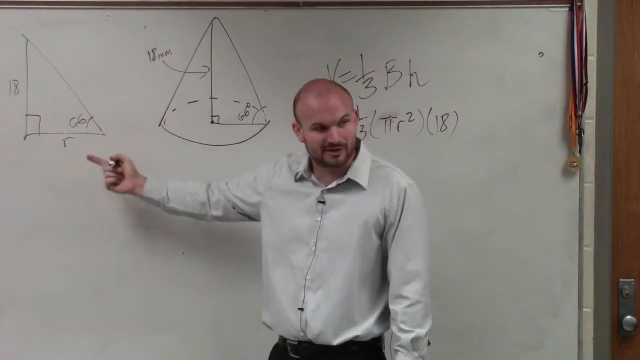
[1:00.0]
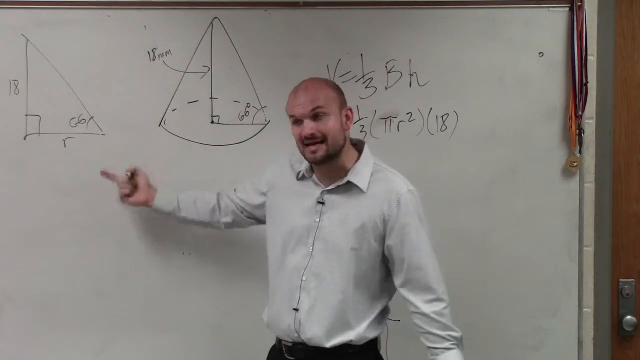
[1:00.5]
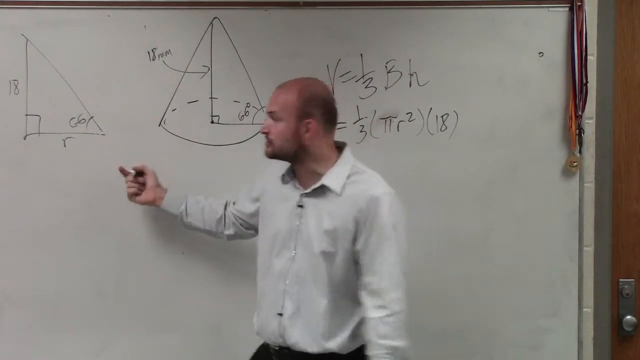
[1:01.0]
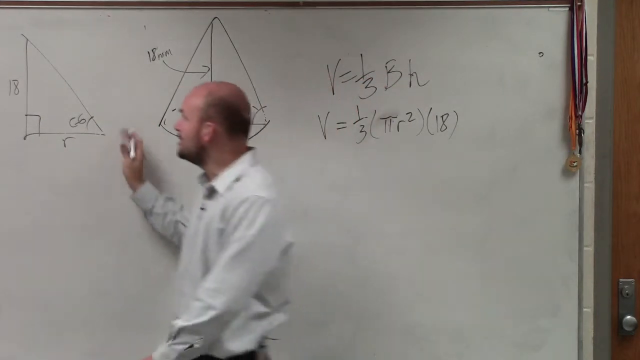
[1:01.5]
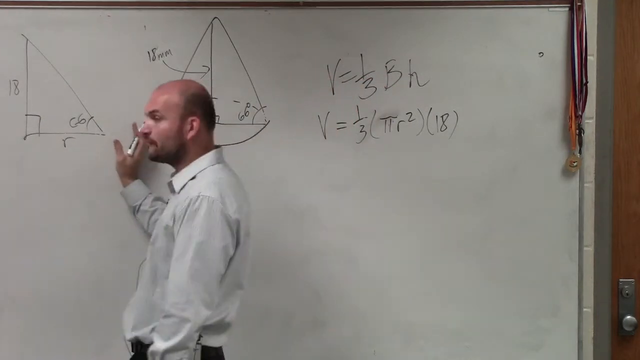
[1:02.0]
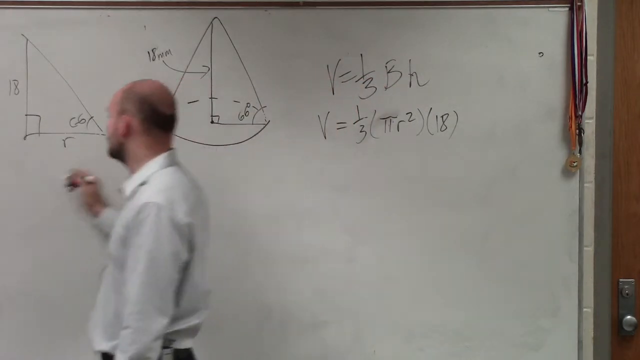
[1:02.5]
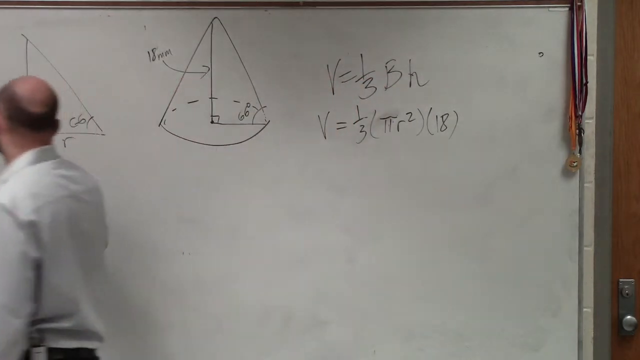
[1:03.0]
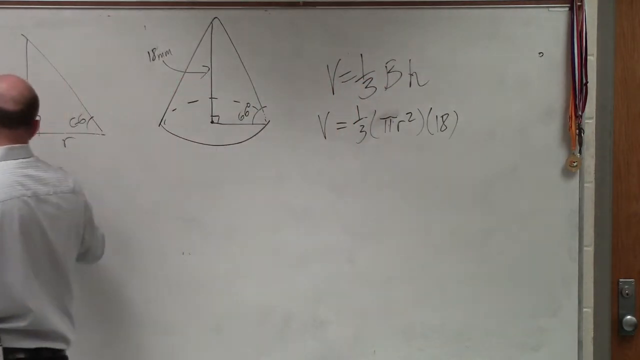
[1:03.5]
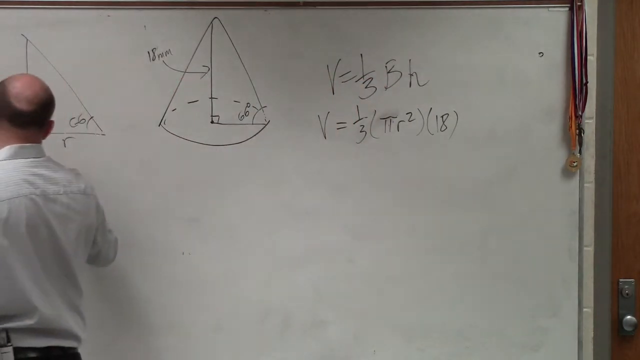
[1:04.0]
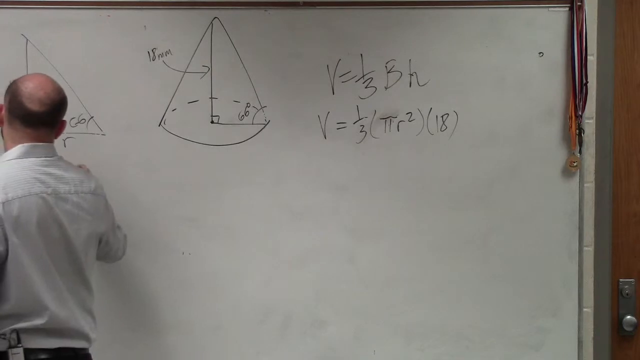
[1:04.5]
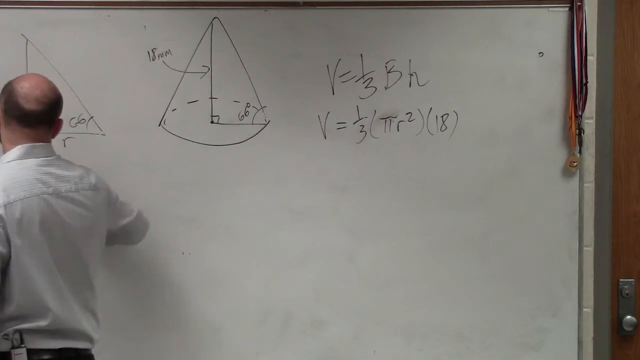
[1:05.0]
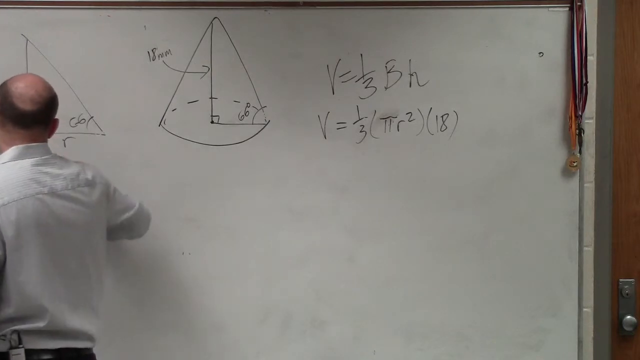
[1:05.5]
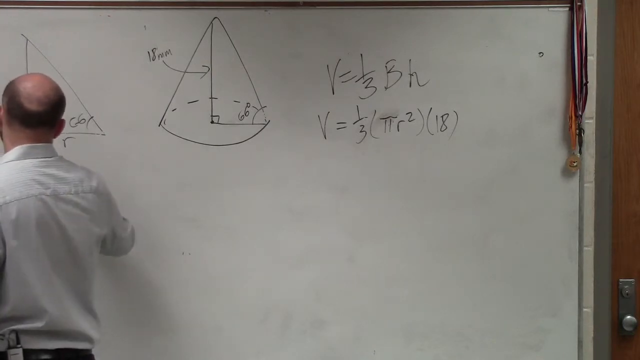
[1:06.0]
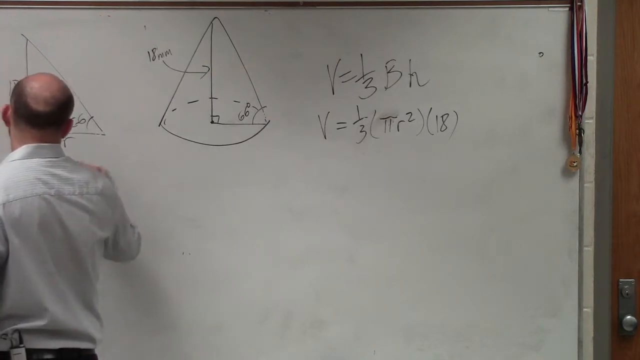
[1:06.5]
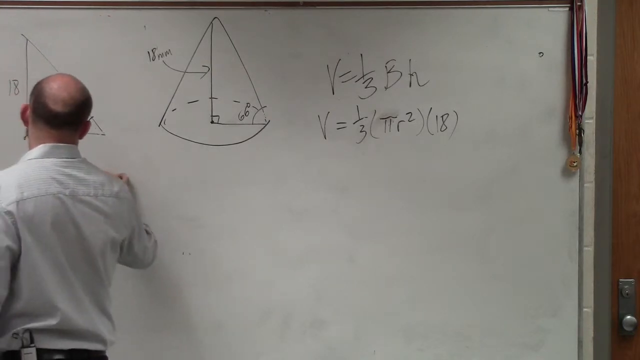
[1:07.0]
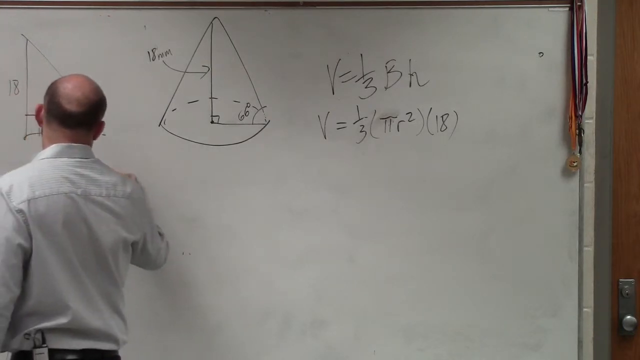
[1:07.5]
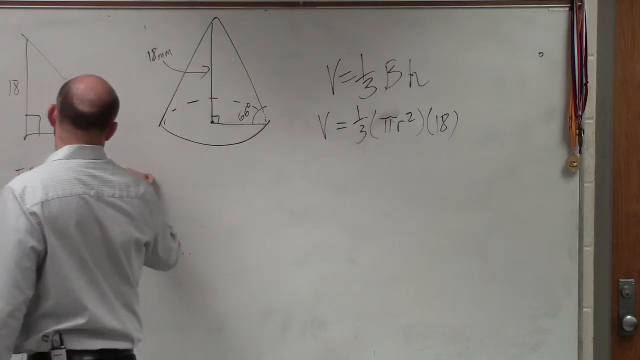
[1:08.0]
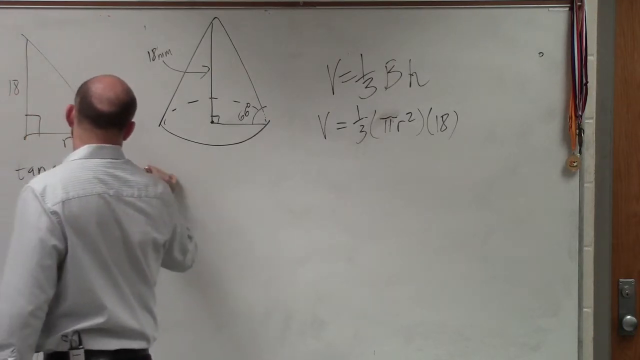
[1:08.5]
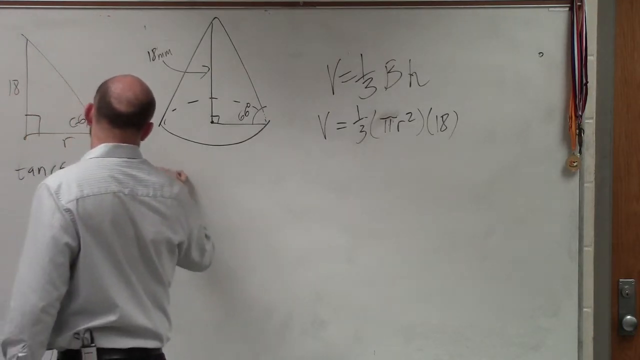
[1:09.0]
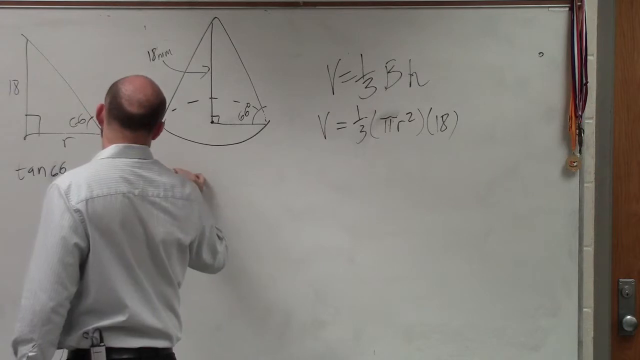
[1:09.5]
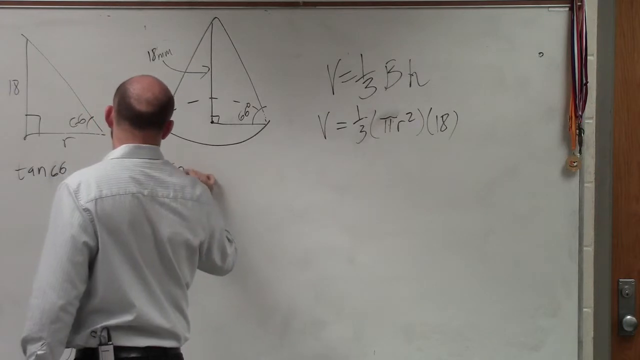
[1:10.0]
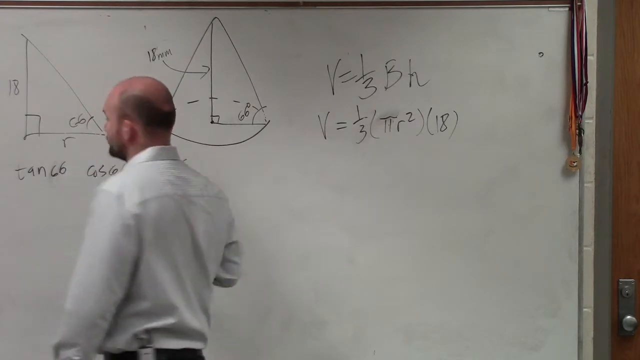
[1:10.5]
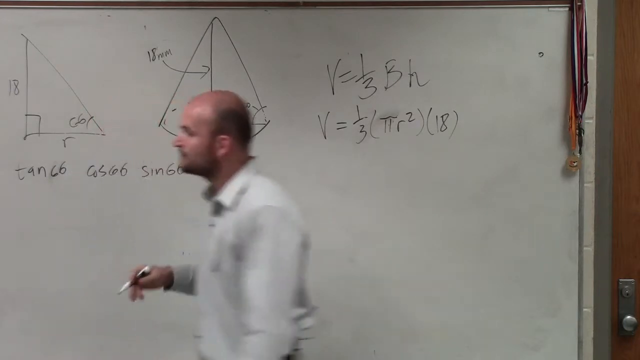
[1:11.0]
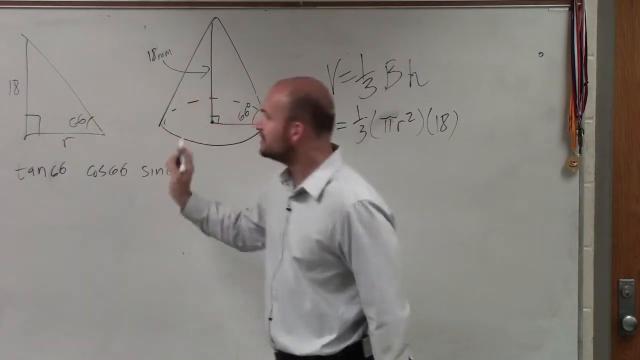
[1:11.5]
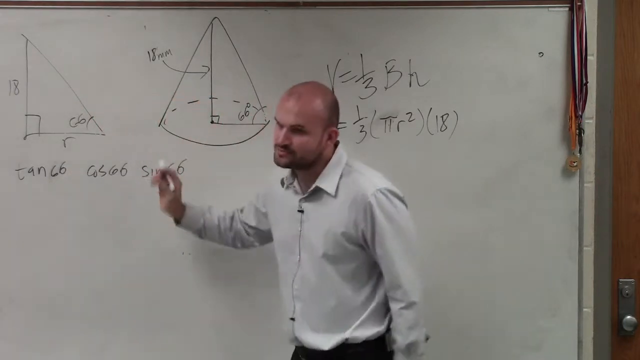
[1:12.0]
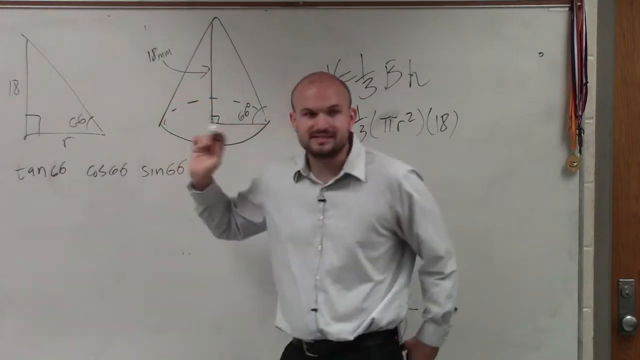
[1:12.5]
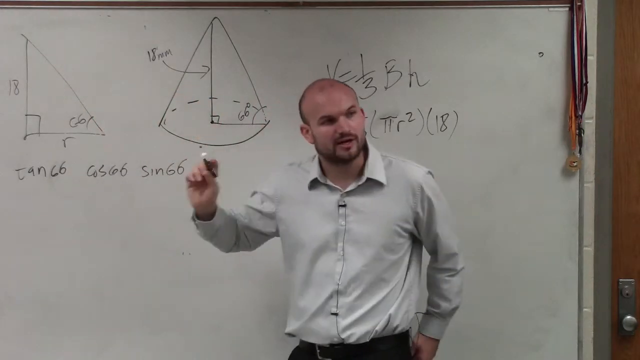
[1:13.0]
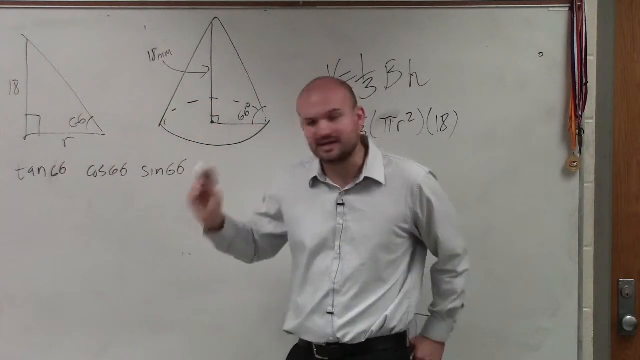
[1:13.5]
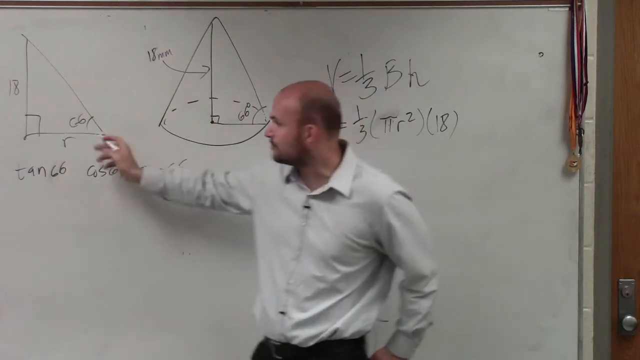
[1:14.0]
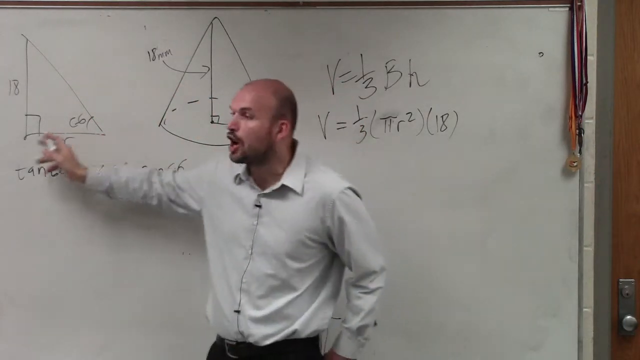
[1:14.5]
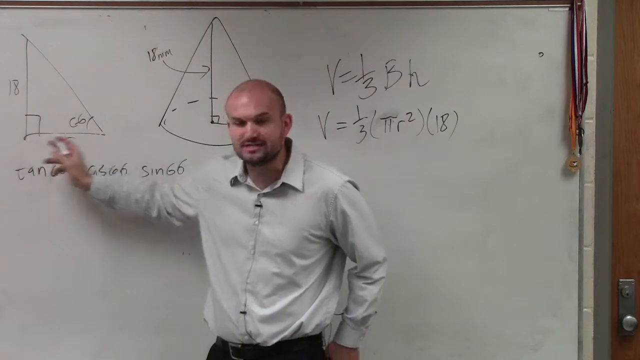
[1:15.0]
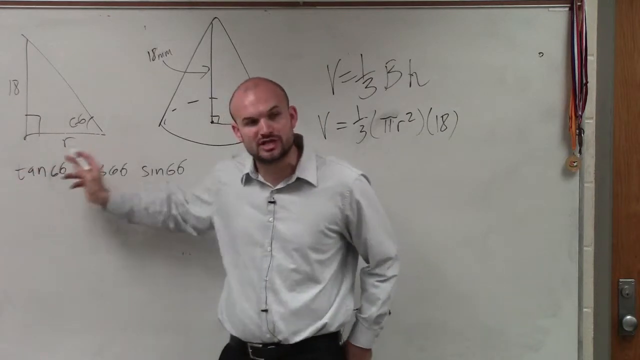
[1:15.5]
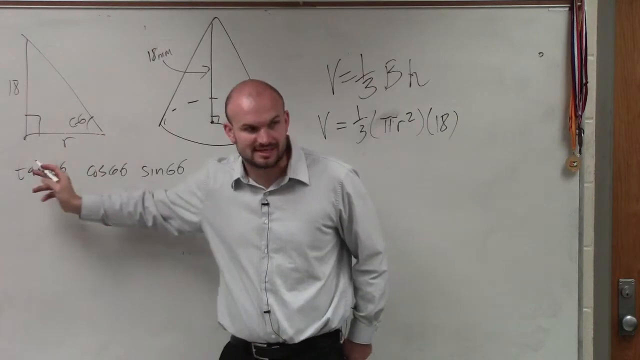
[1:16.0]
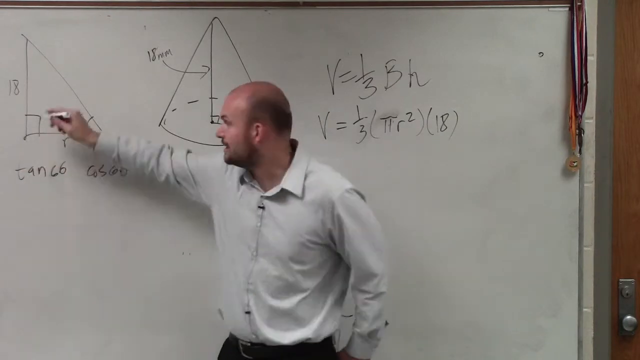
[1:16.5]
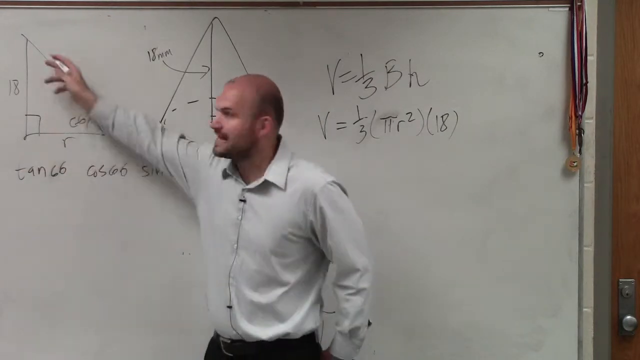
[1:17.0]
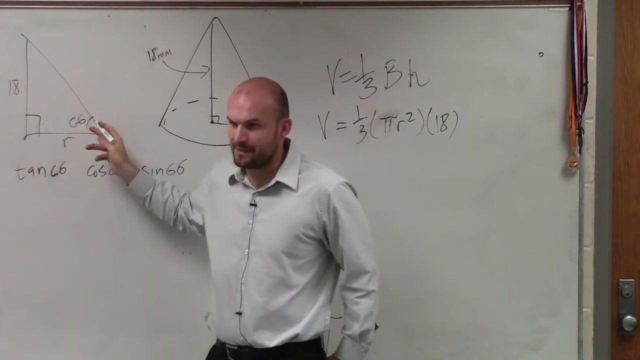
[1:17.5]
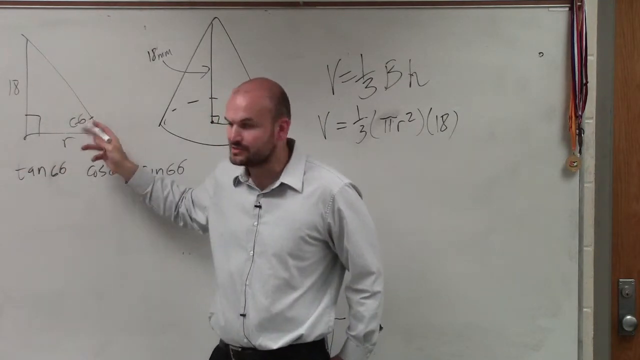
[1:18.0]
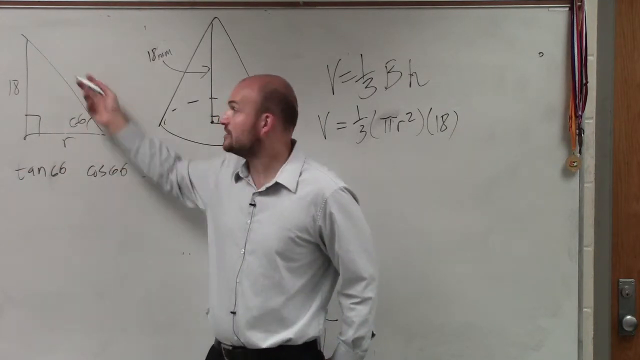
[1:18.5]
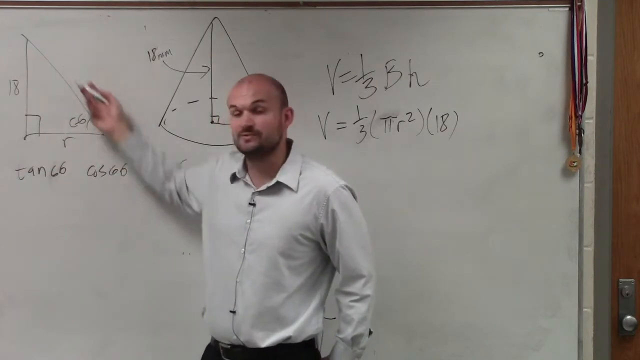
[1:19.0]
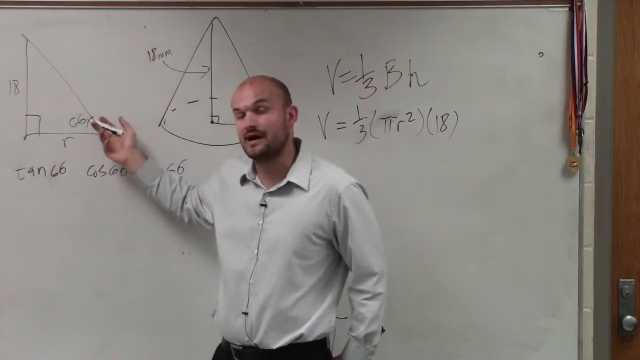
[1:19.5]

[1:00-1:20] The teacher writes more on the whiteboard under the triangle he drew on the far left. As he turns back, the microphone is visible again. He points at the whiteboard, gesturing with his hands, at what he has just written. He puts his left hand in his pocket and gestures with his right hand, pointing with his index finger at the triangle and at its different sides, including the 66 marking. The right hand he points with is still holding the black whiteboard marker.